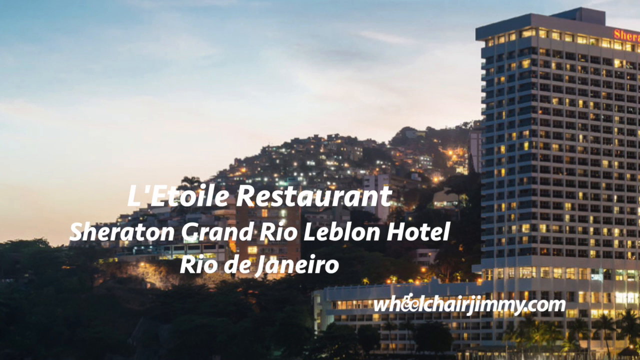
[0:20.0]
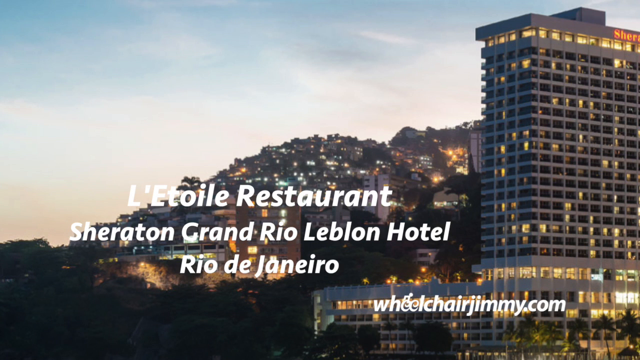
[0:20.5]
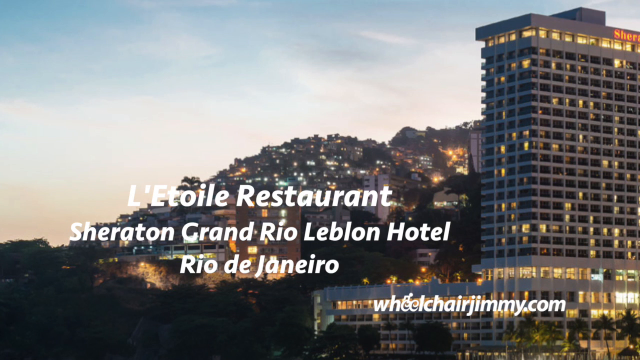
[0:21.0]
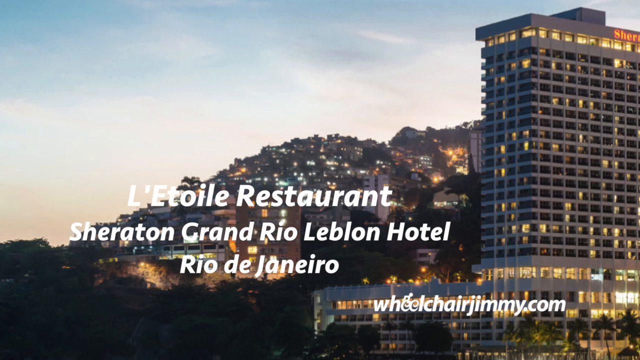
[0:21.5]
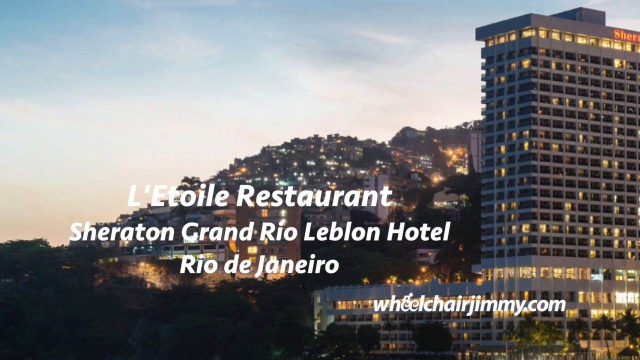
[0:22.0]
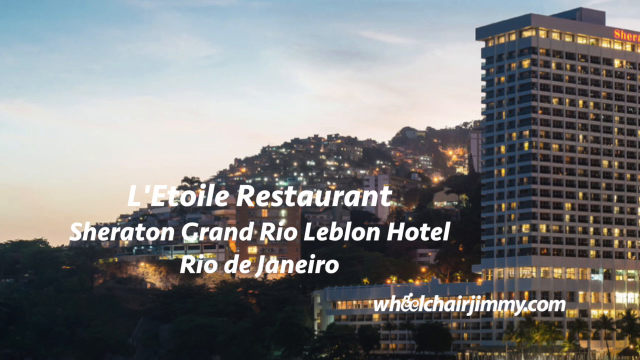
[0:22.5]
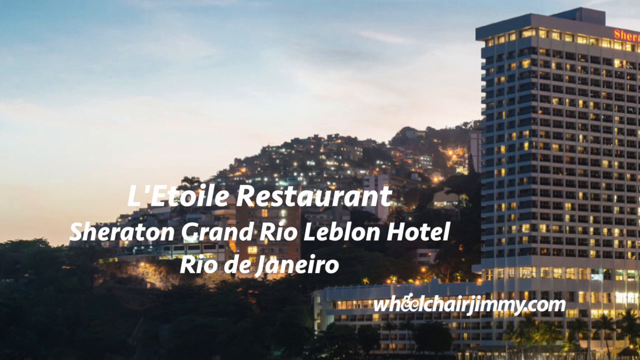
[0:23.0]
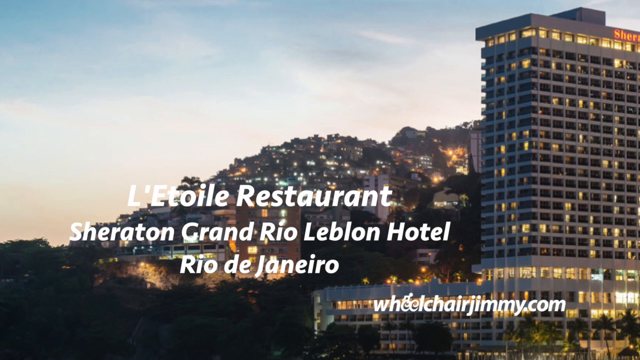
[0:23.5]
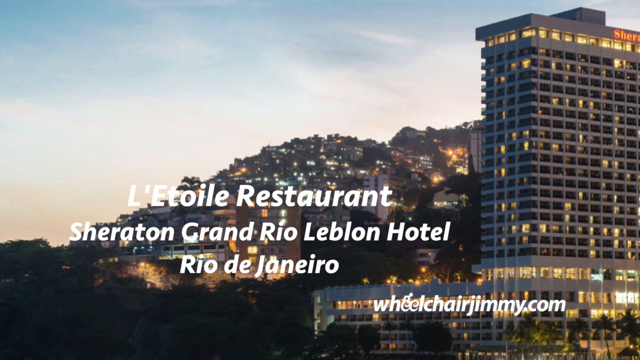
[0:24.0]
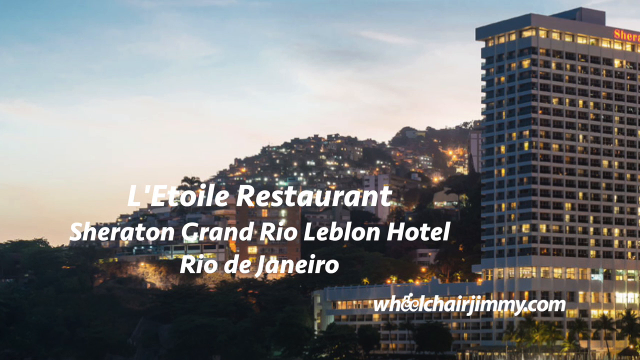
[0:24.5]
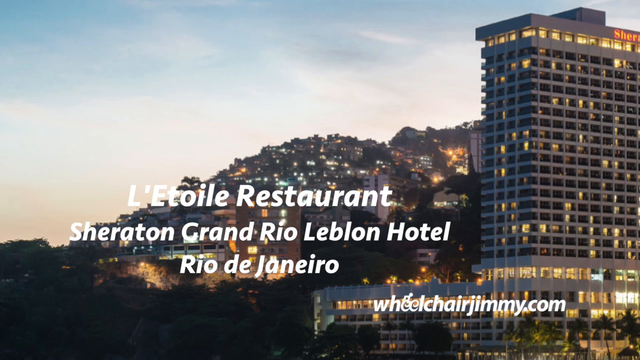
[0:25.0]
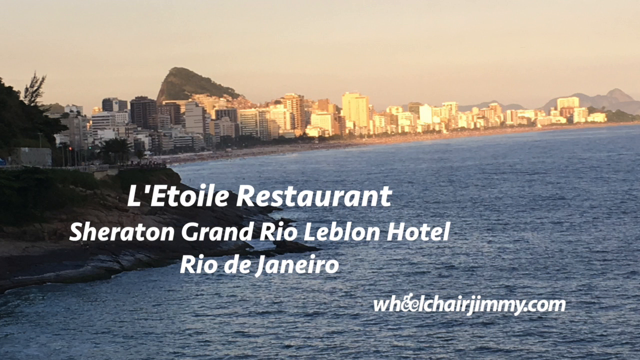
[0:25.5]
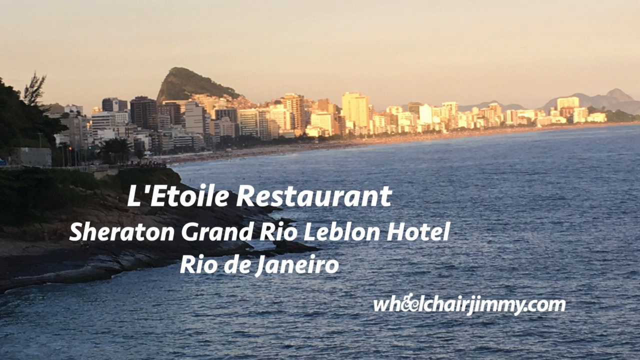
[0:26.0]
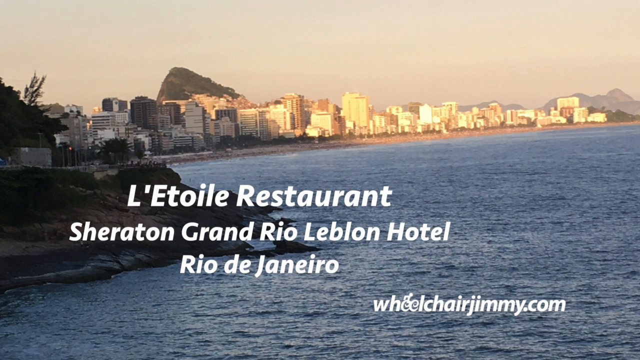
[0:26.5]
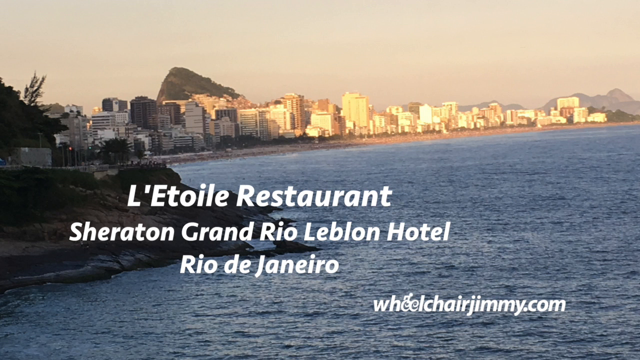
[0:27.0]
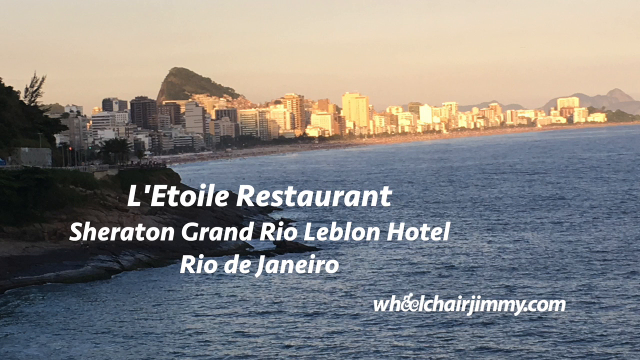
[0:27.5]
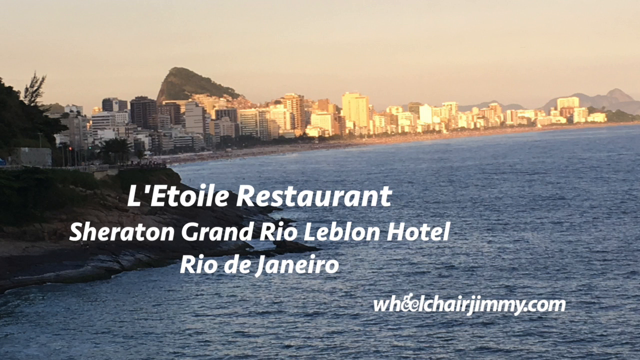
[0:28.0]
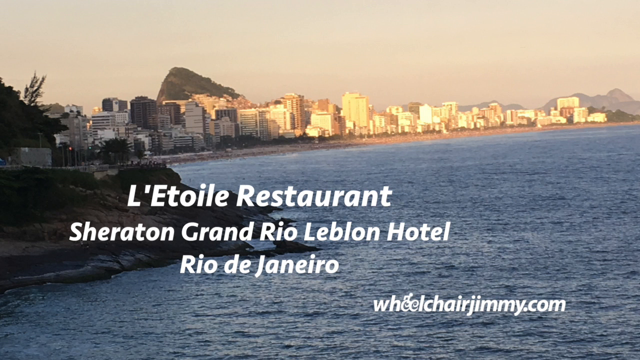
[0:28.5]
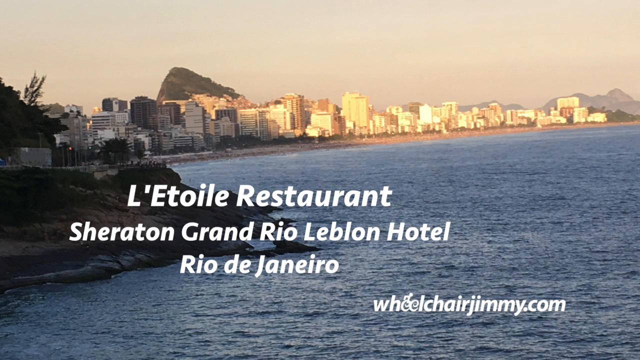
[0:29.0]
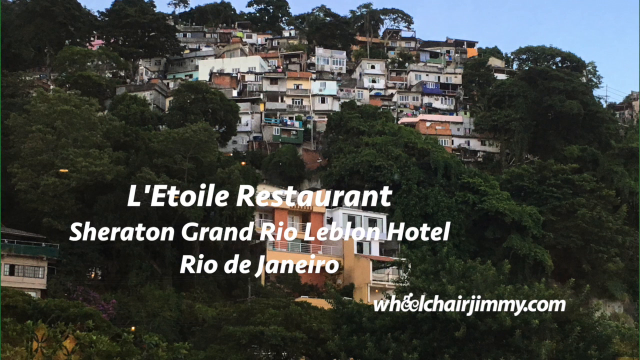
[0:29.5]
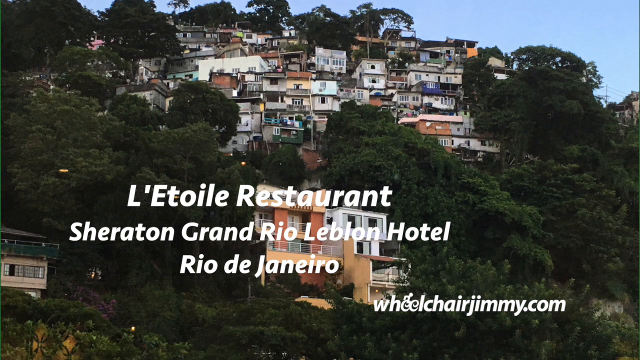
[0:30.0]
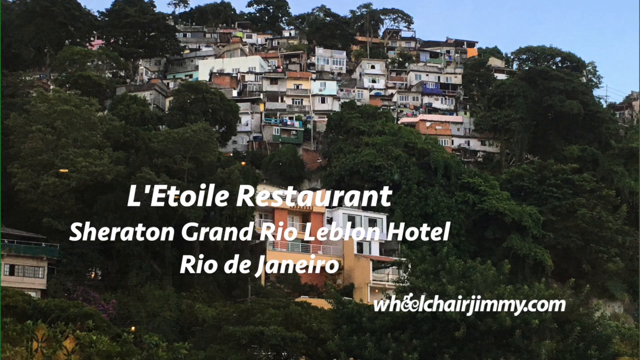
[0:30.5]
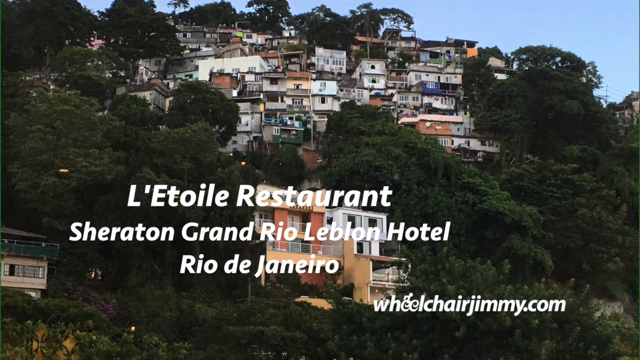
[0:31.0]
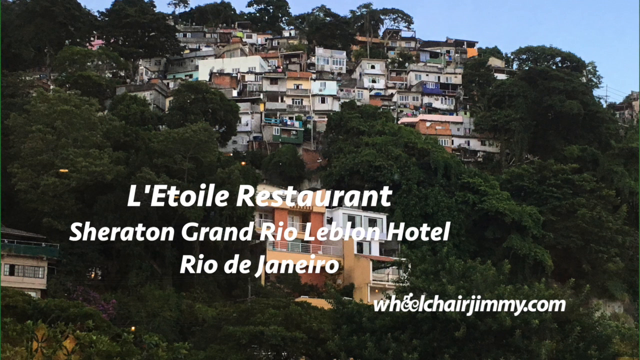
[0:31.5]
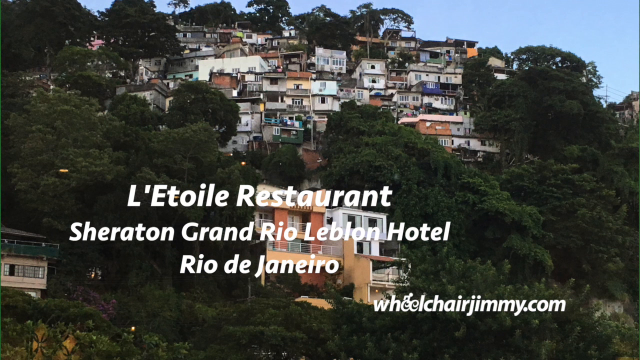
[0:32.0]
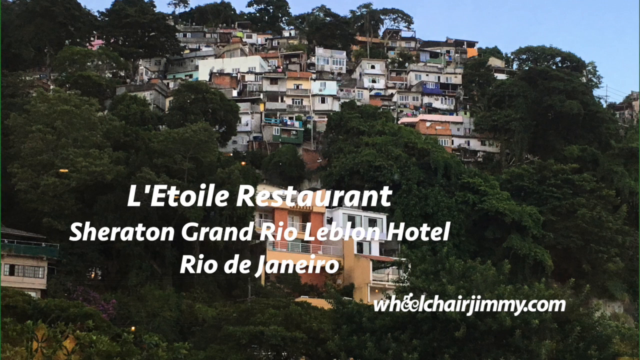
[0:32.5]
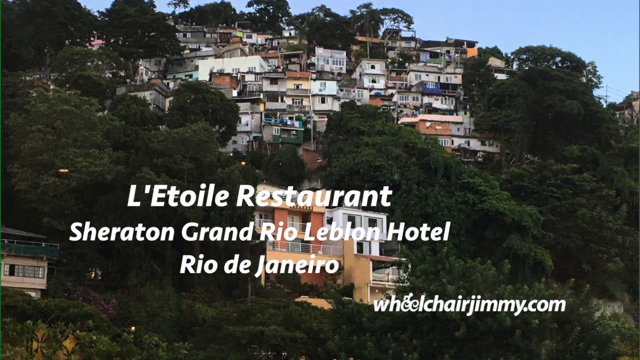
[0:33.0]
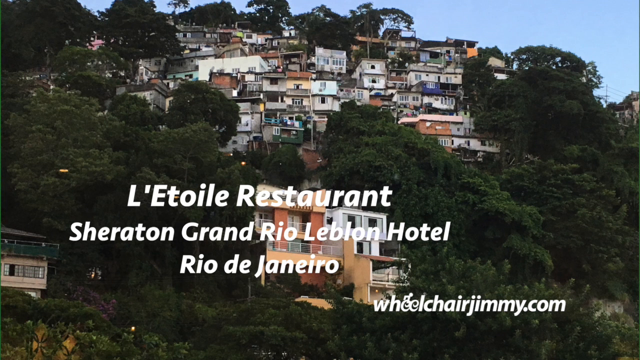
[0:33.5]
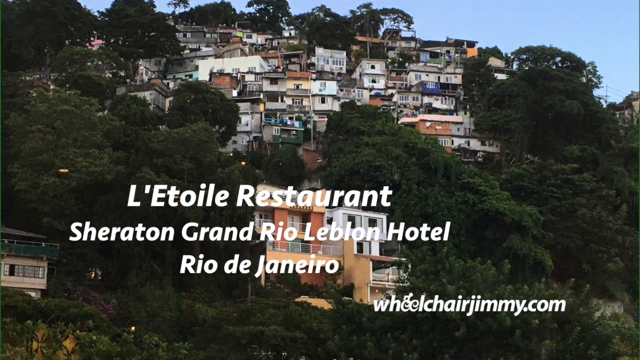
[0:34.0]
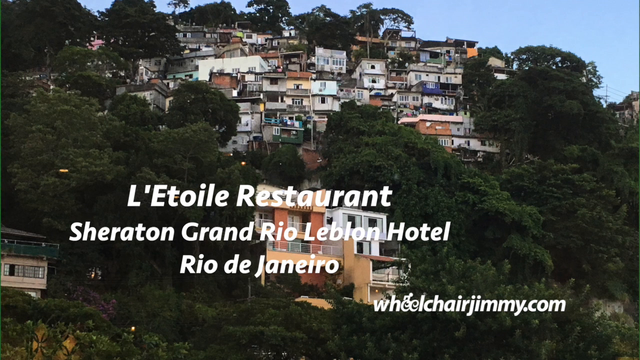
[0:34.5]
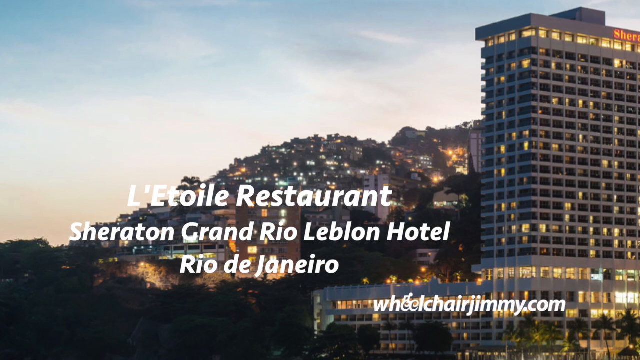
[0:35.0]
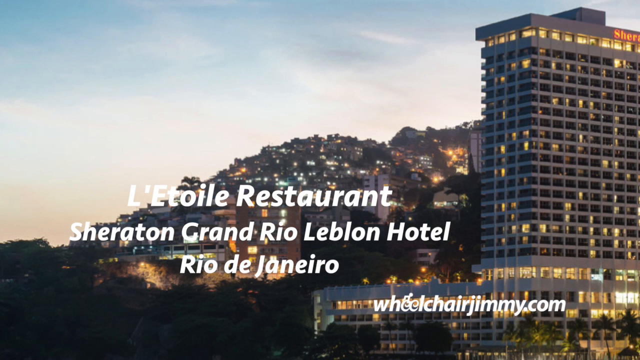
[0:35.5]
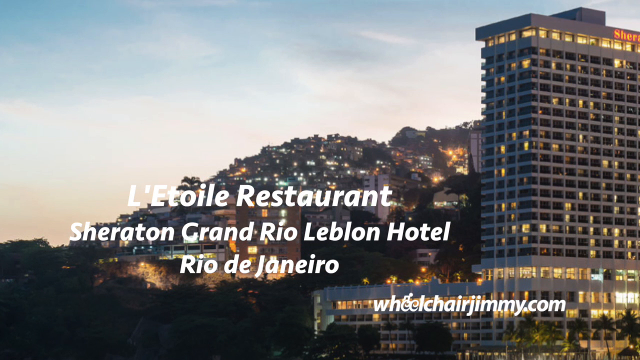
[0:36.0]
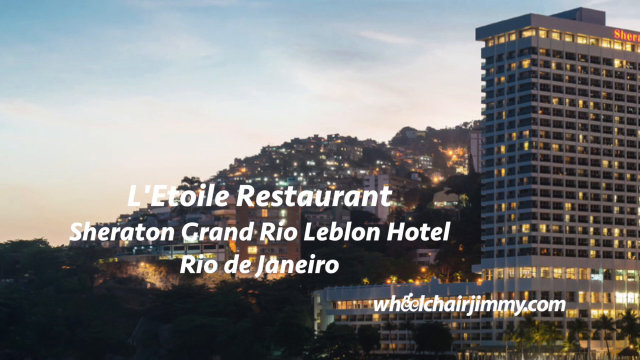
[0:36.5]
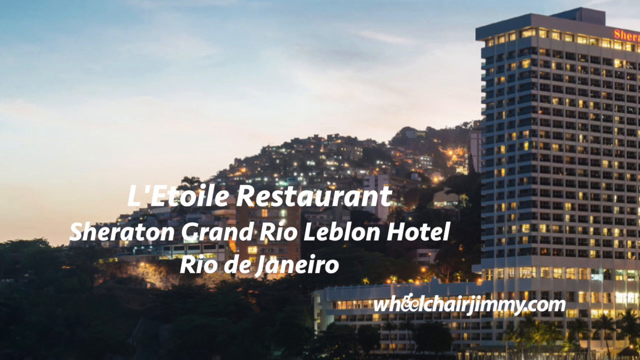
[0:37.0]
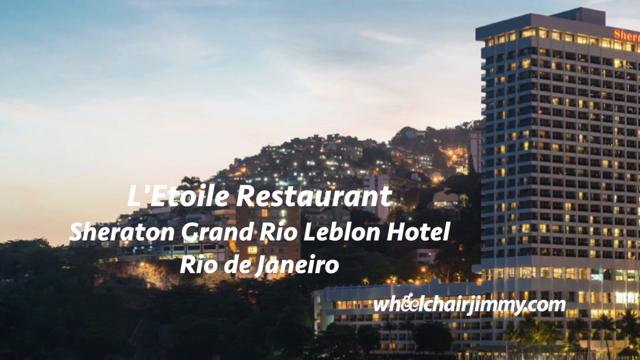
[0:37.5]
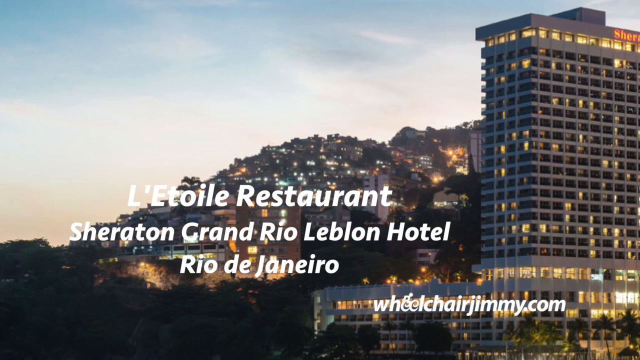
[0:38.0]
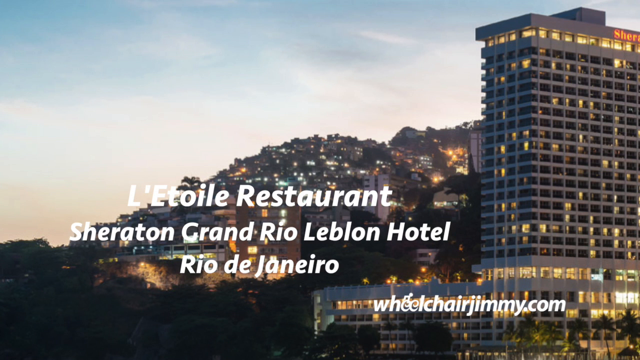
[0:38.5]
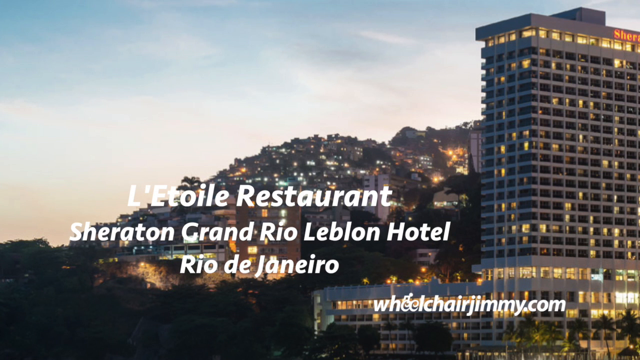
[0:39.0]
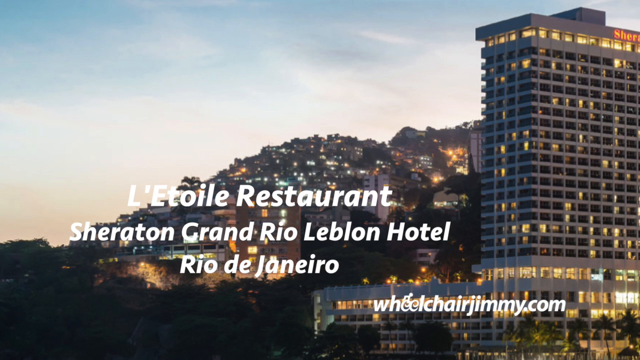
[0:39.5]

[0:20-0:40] The background photo shows a quite tall hotel with a lot of windows on the right-hand side of the frame, likely a Sheraton. On screen are the words "L'Etoile Restaurant Sheraton Grand Rio Leblon Hotel Rio de Janeiro," and in the bottom right corner is "wheelchairjimmy.com." The background image then changes to a view of many buildings along a beach, with the water up close and the buildings further back; the writing stays the same. The photo changes again to a hillside filled with houses going upwards, with the on-screen words unchanged. It then cuts back to the earlier image with the Sheraton hotel on the right-hand side, the words still unchanged. Behind the words is what looks like a hillside filled with houses; it is a bit dark outside, and lights shine through the windows of the houses.